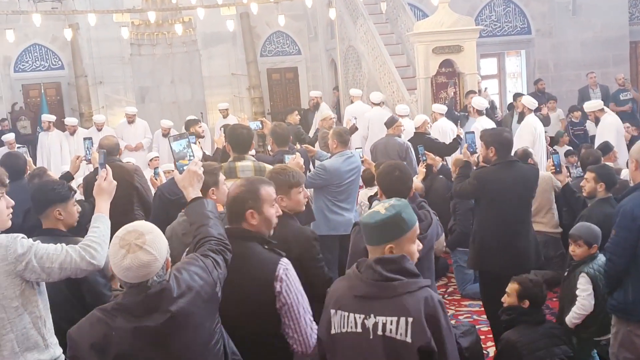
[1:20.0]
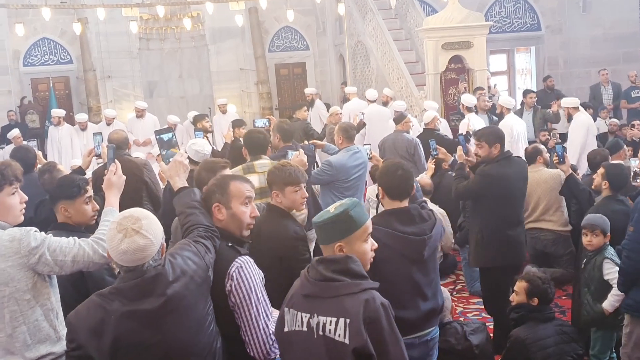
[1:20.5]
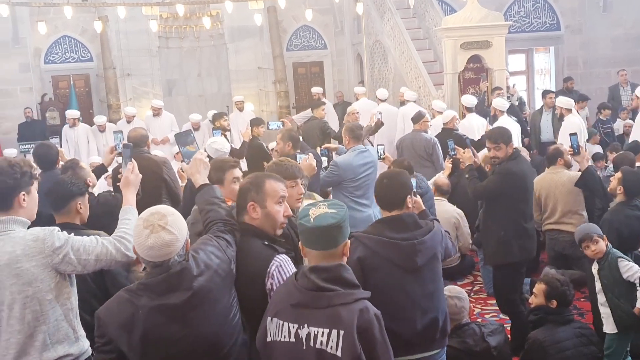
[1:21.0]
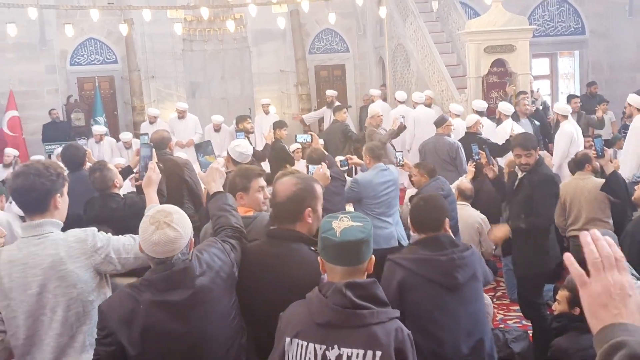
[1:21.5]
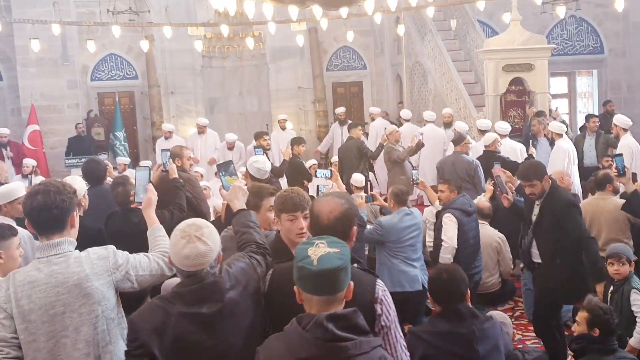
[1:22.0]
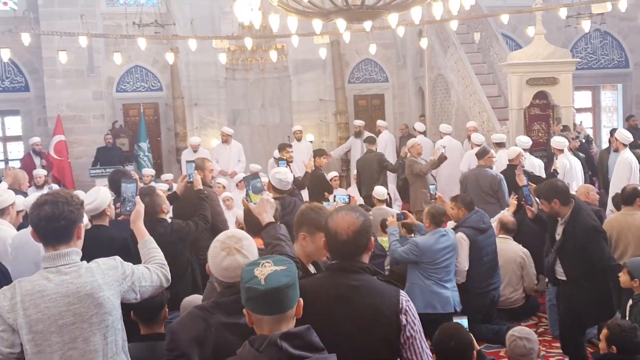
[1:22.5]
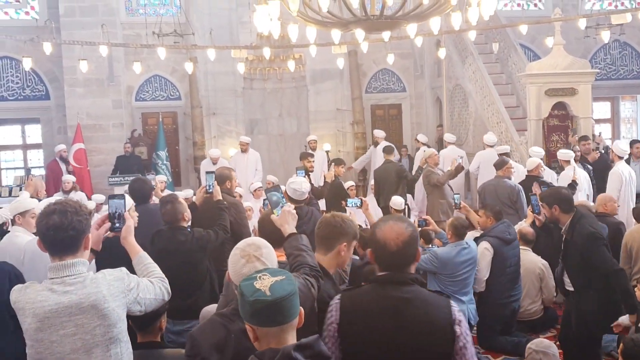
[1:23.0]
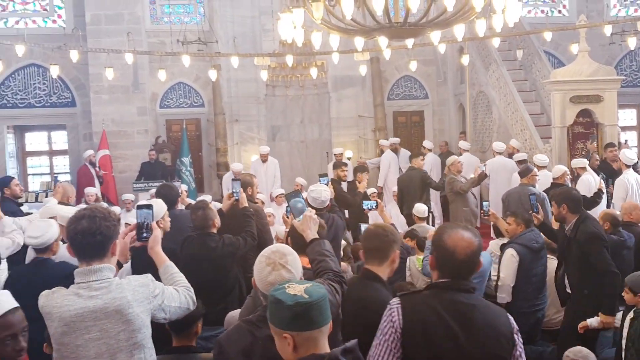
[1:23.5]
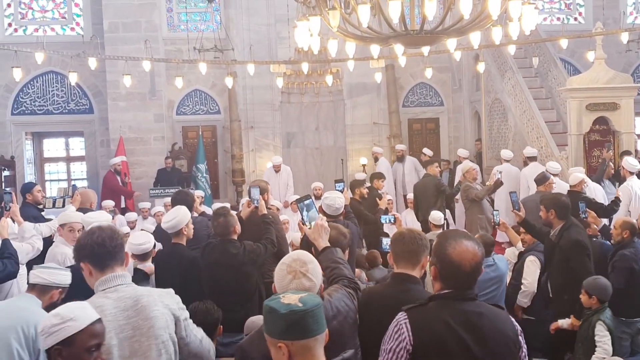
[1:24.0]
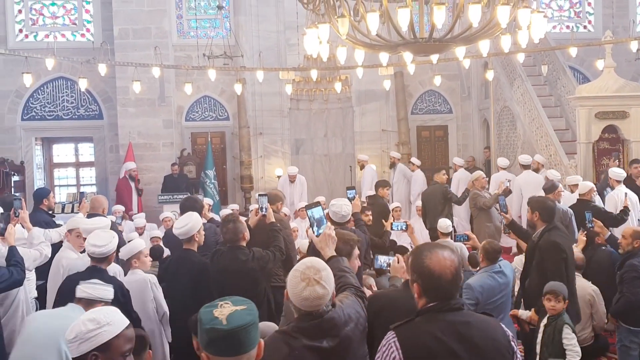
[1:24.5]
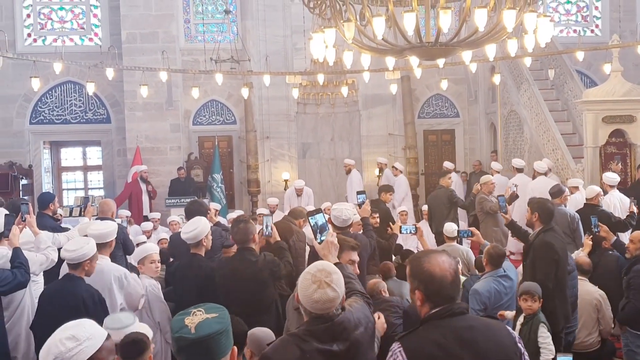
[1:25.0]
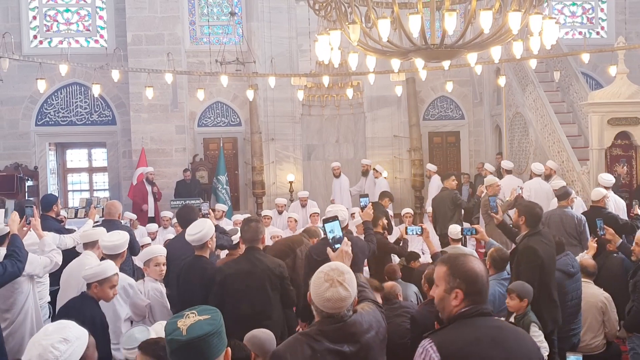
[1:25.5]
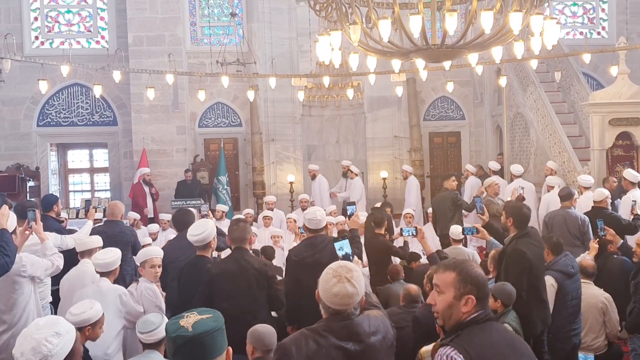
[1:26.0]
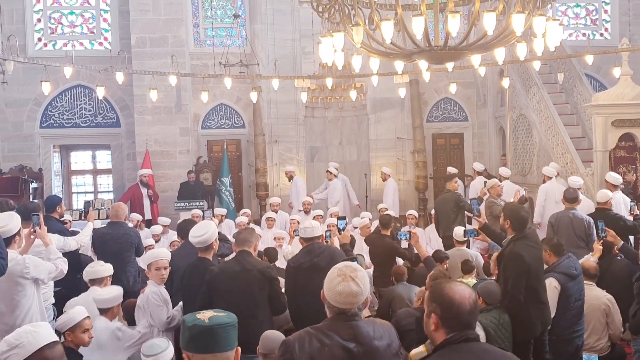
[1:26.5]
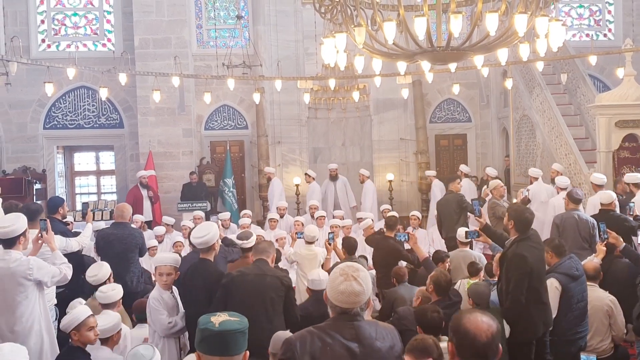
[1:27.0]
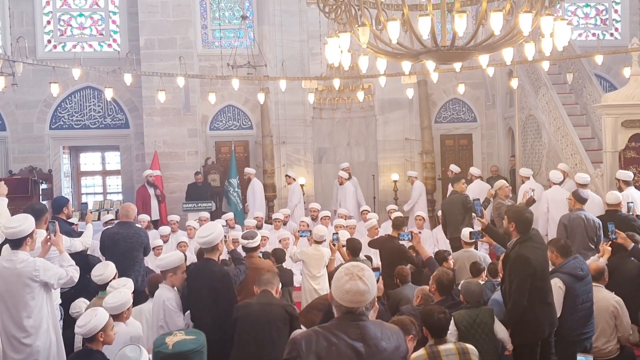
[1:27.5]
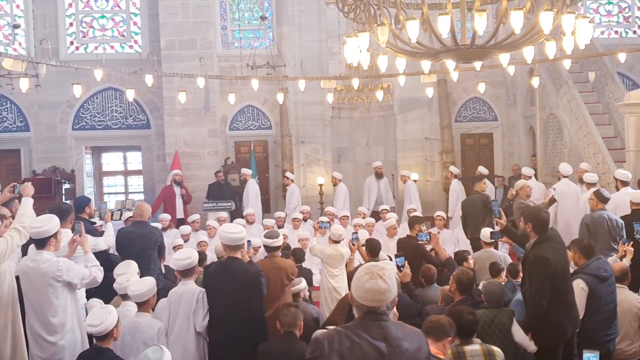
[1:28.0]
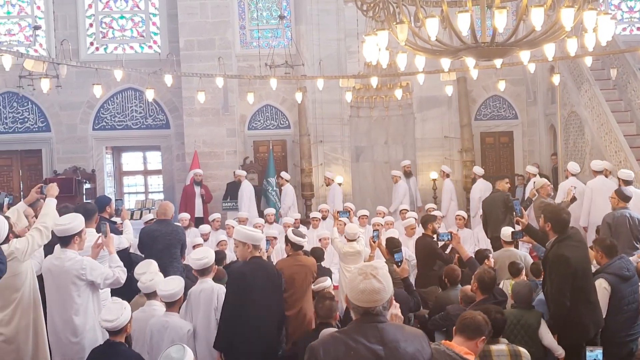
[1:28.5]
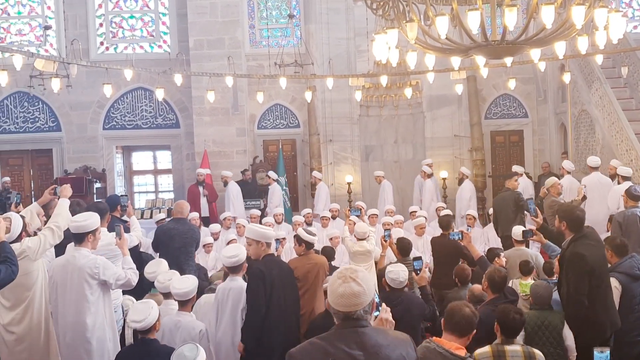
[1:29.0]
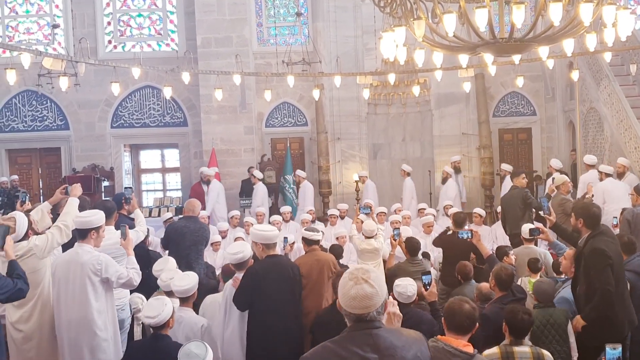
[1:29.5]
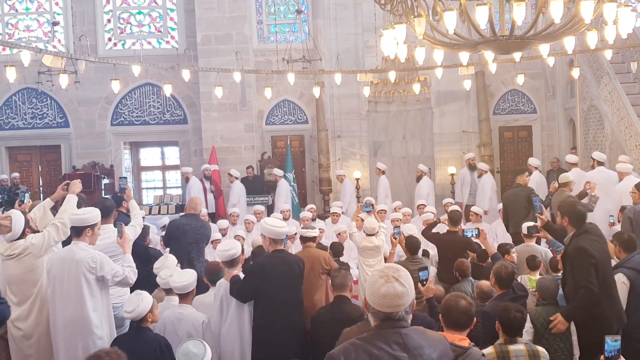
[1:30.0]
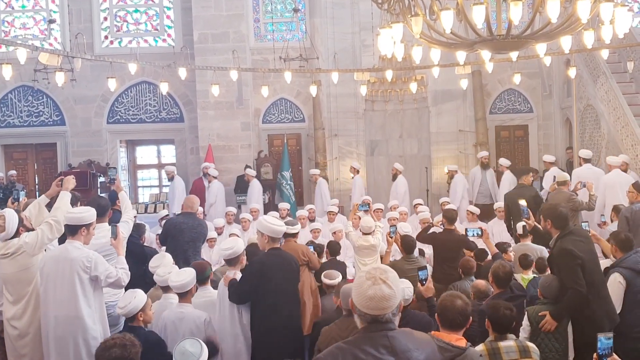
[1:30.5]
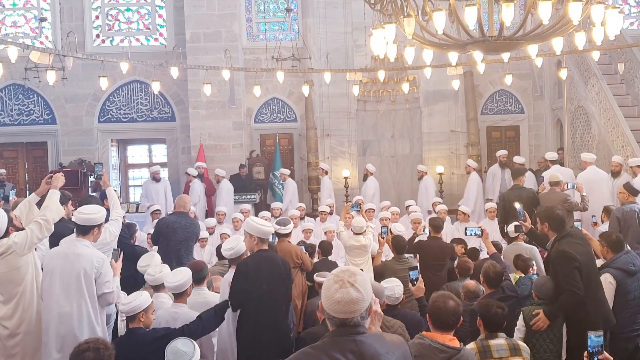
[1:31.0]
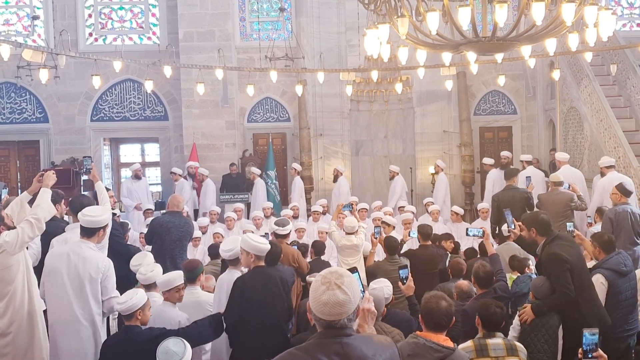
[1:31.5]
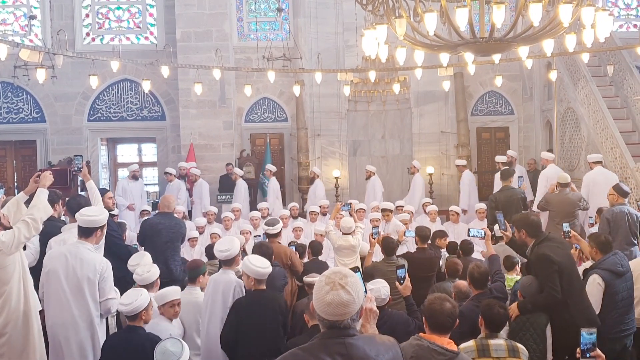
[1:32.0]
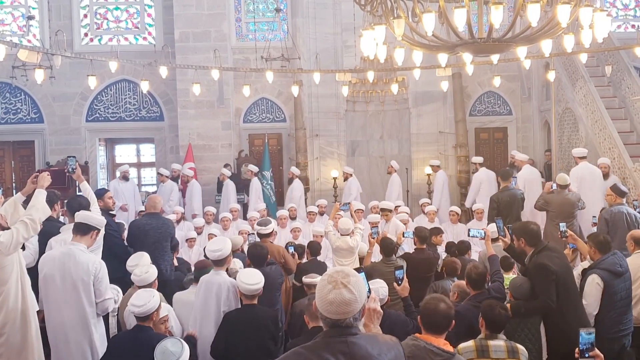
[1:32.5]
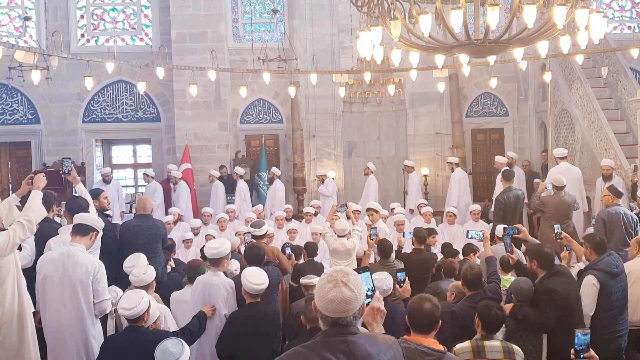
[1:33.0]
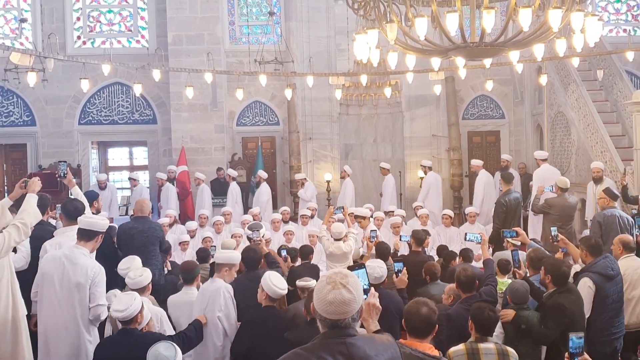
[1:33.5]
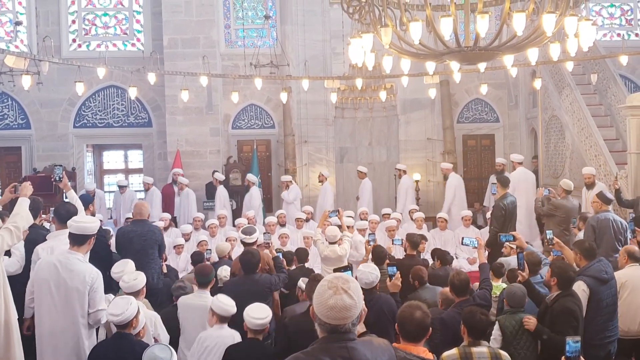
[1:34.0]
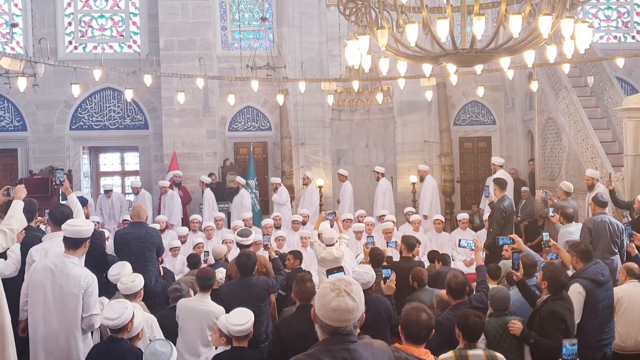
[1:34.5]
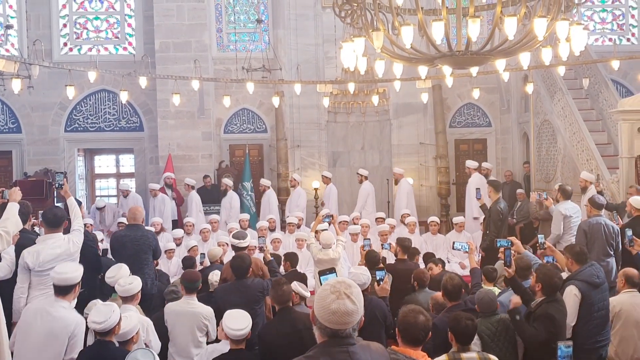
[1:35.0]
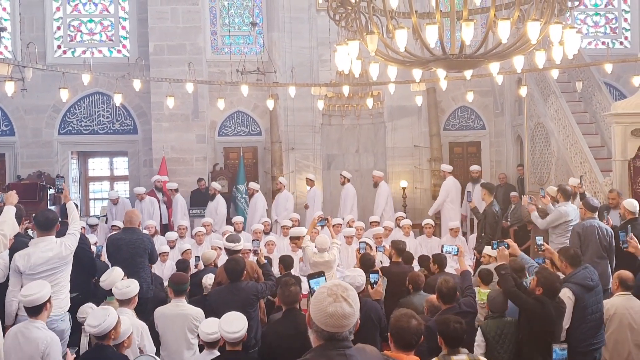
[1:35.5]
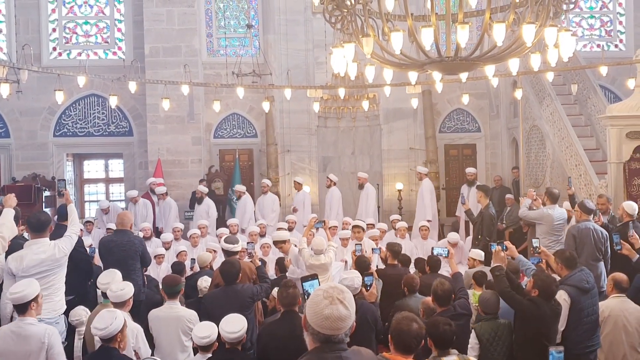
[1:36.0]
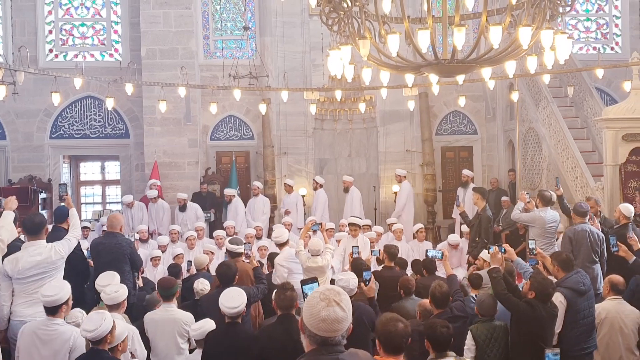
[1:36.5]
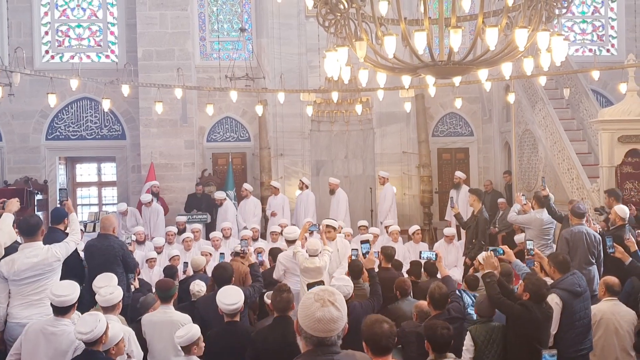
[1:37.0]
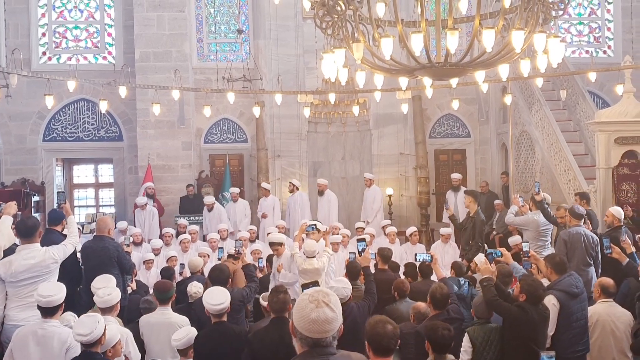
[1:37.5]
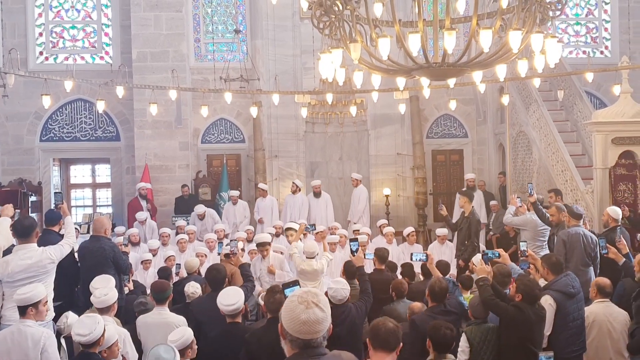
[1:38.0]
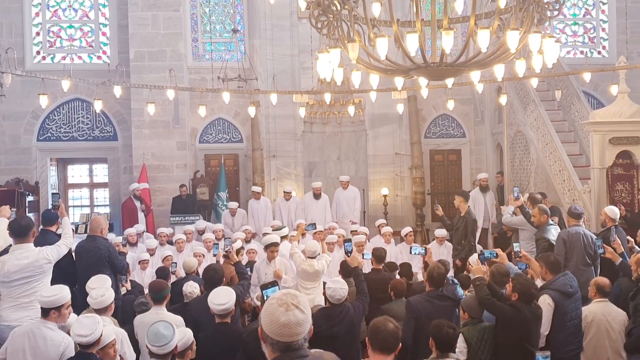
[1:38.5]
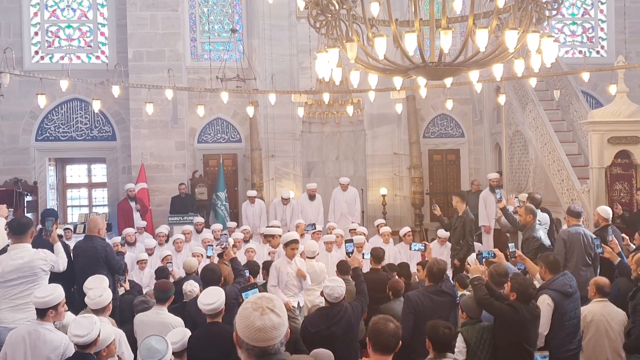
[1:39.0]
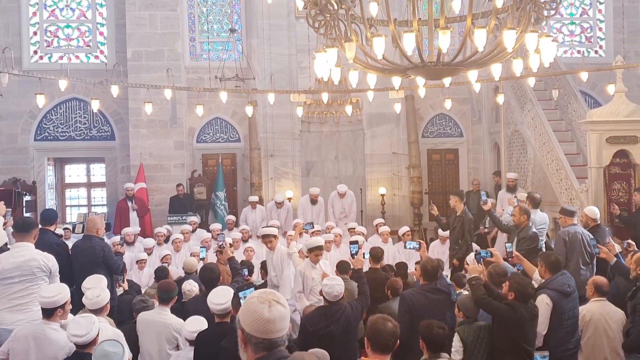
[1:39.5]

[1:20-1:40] A procession of men comes into a church and is led toward the front, where they kind of go in lines one by one, get to their seats, and sit down one after another. The whole area is surrounded by a congregation of people watching the performance, some videoing and some snapping pictures in the background. Large chandeliers and lights hang in the middle area, and up above is a balcony with some bystanders. Many intricate stained glass windows in the background let light in, with lots of colors and patterns. Some young little boys or girls are also in the background.